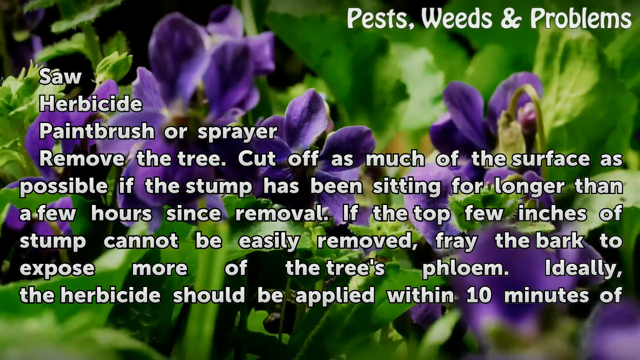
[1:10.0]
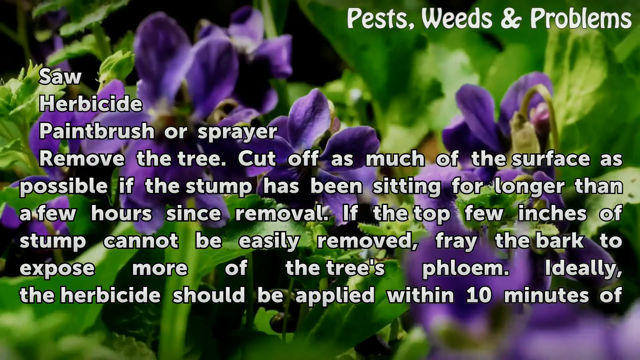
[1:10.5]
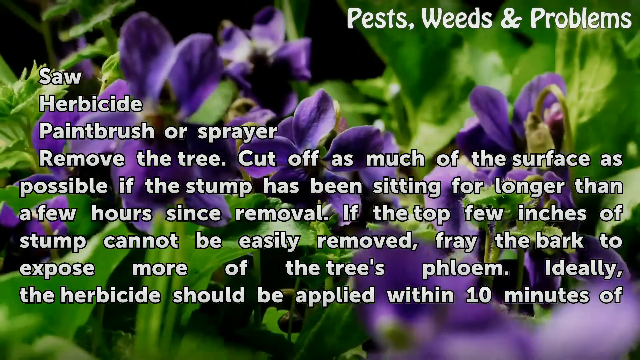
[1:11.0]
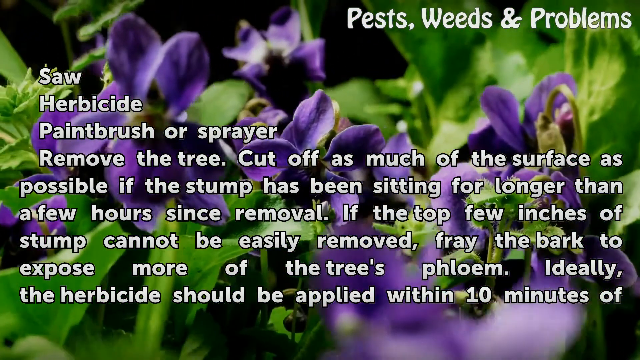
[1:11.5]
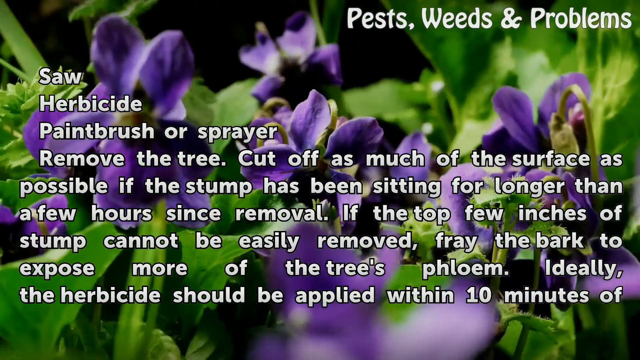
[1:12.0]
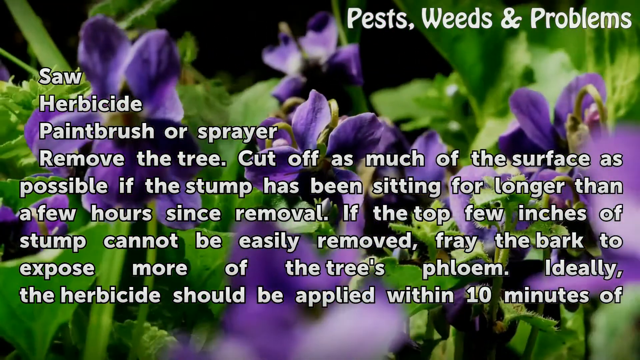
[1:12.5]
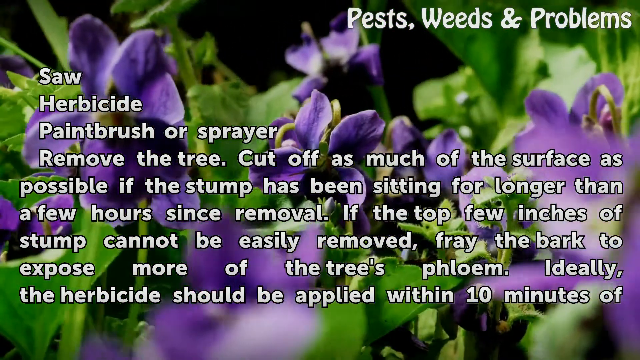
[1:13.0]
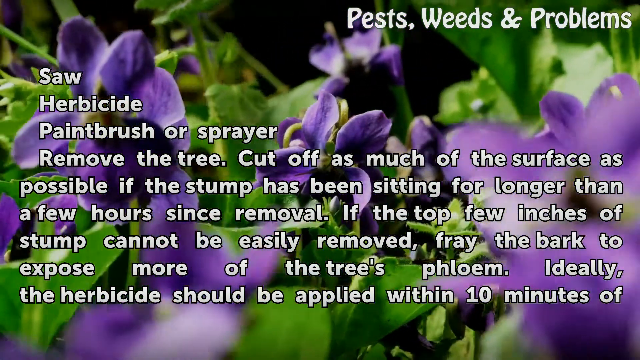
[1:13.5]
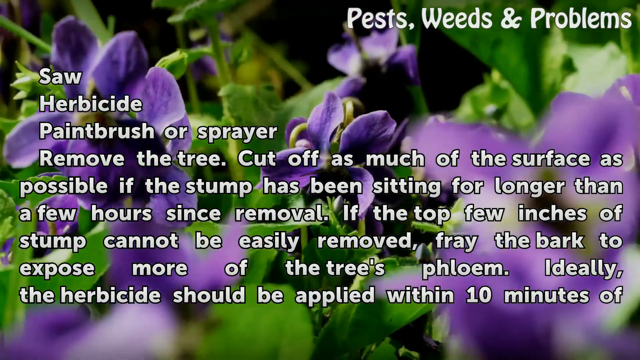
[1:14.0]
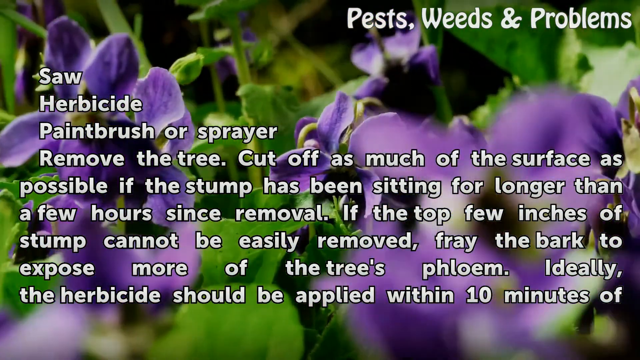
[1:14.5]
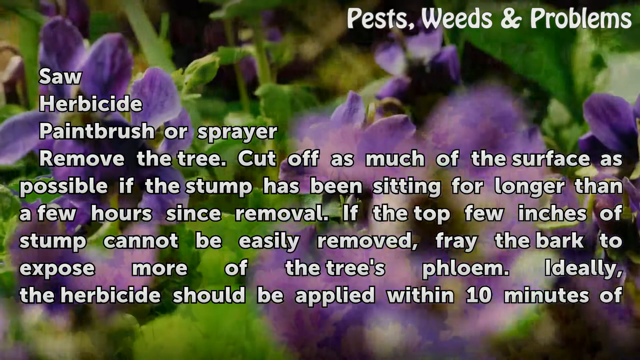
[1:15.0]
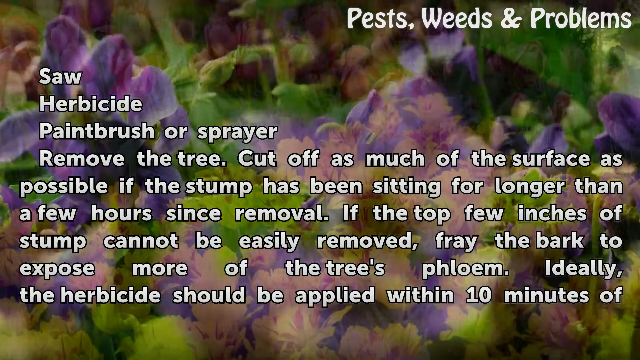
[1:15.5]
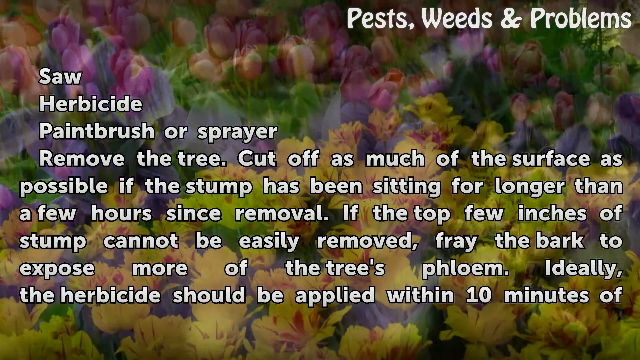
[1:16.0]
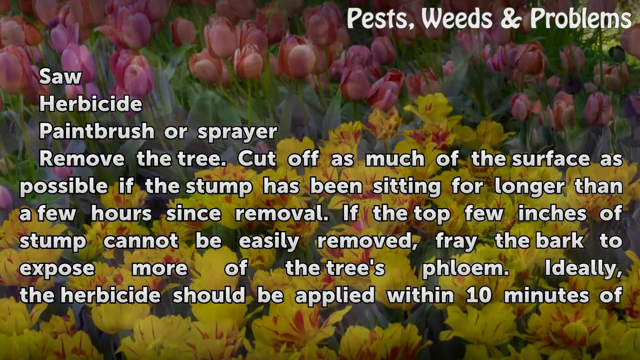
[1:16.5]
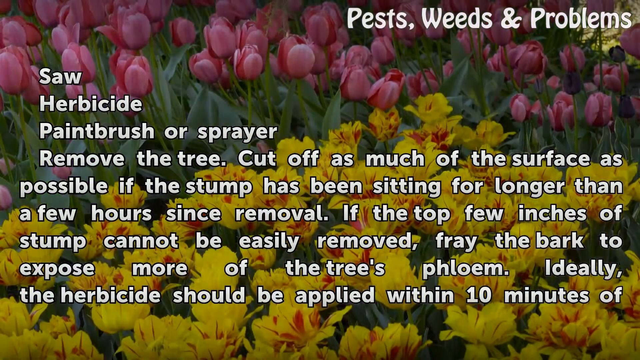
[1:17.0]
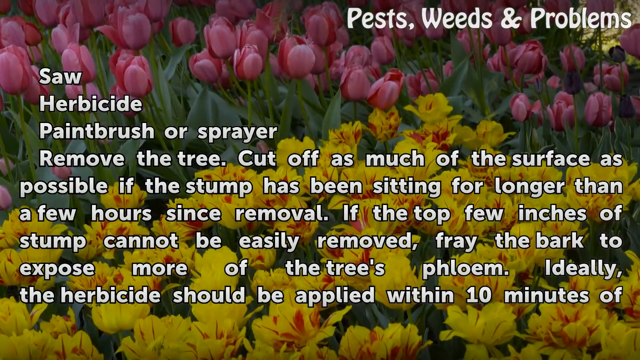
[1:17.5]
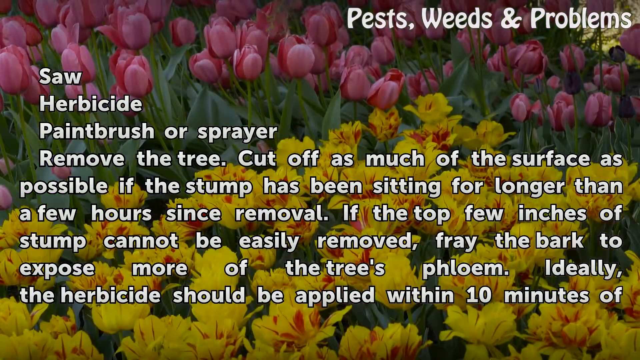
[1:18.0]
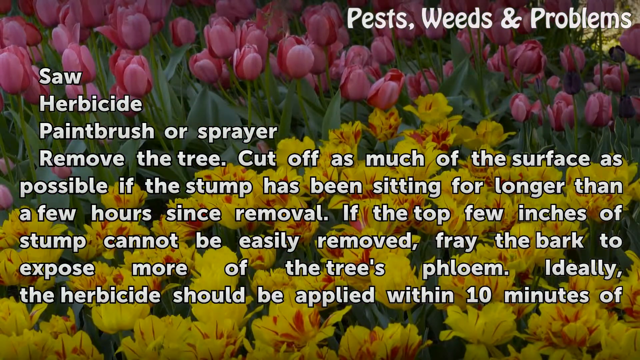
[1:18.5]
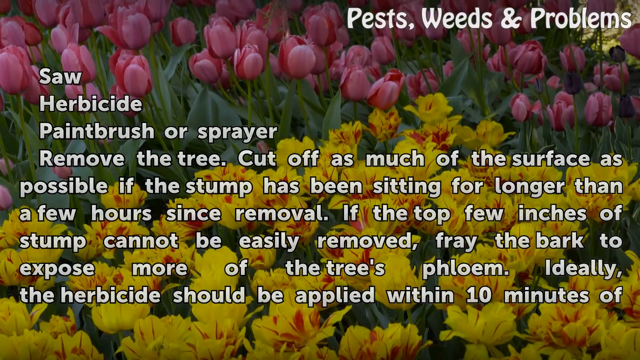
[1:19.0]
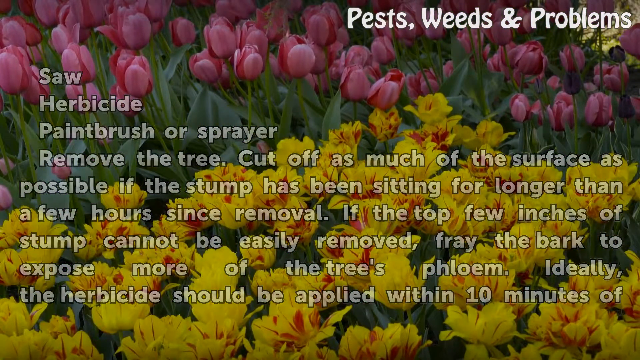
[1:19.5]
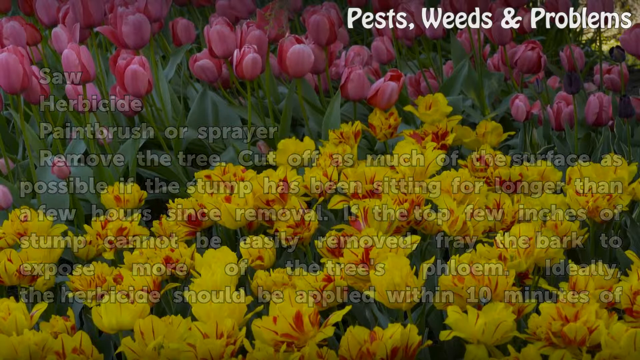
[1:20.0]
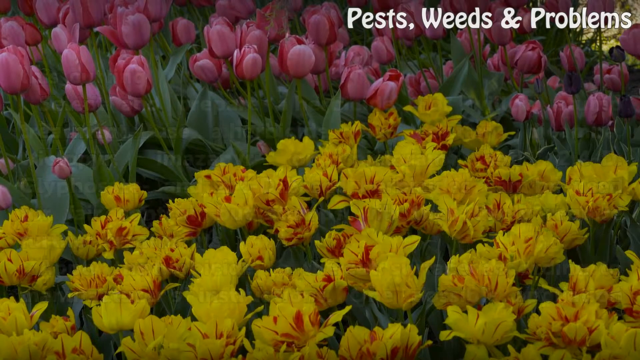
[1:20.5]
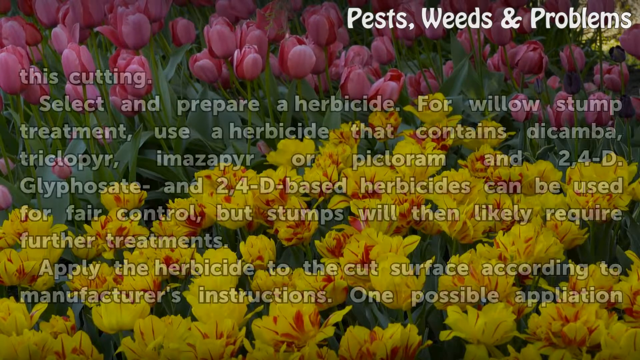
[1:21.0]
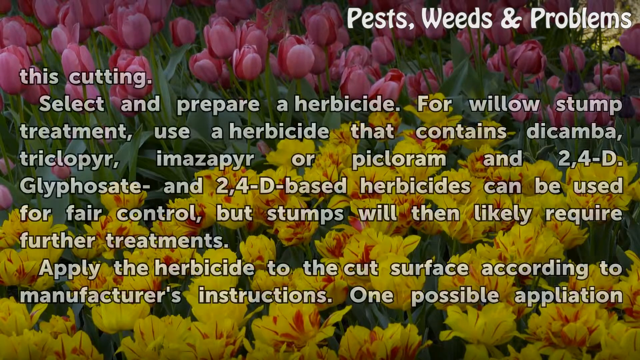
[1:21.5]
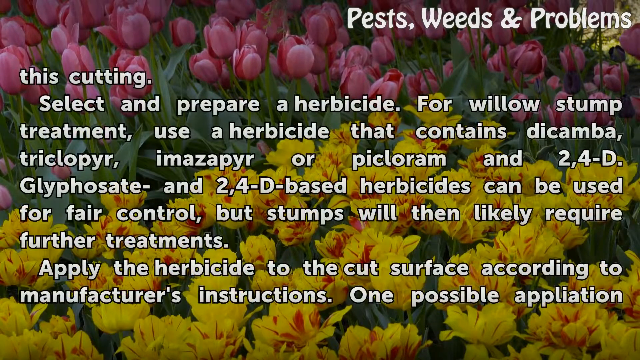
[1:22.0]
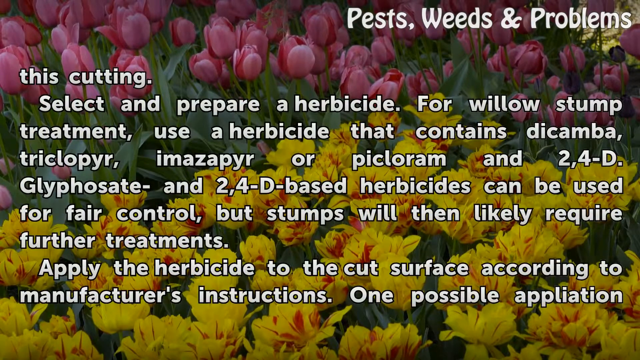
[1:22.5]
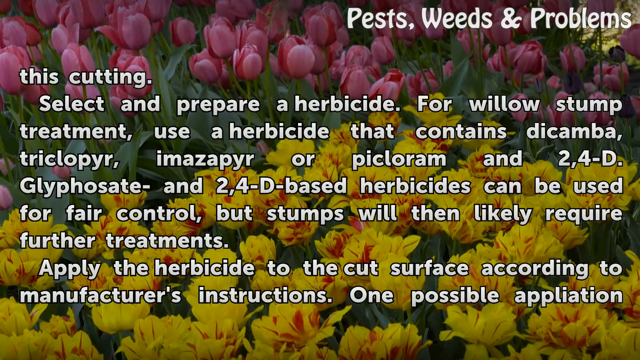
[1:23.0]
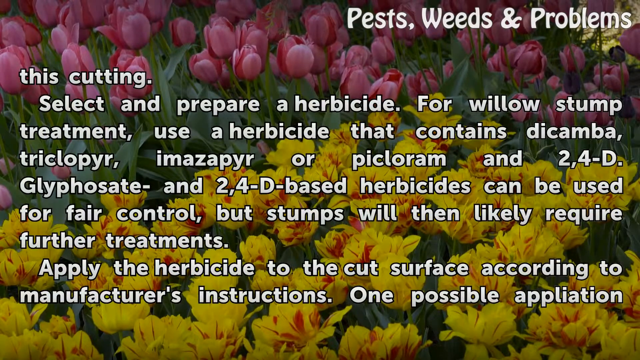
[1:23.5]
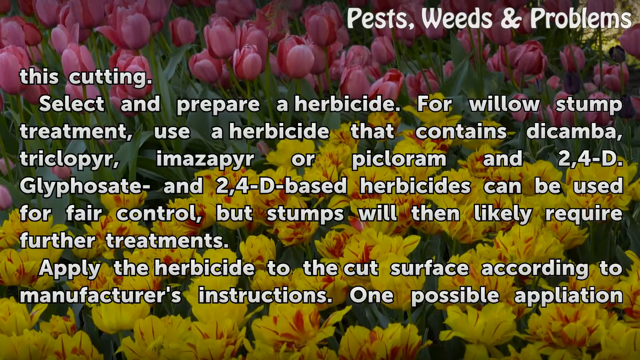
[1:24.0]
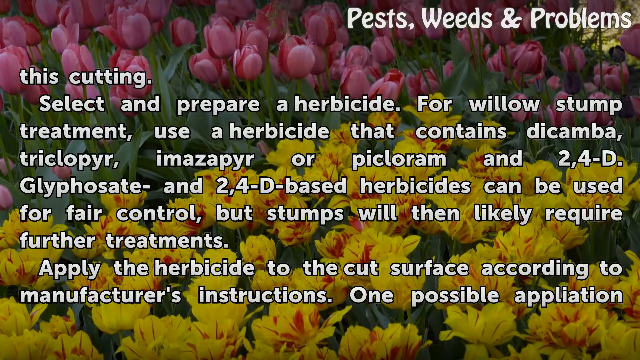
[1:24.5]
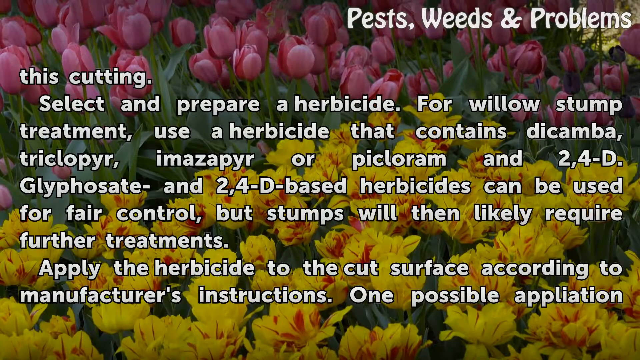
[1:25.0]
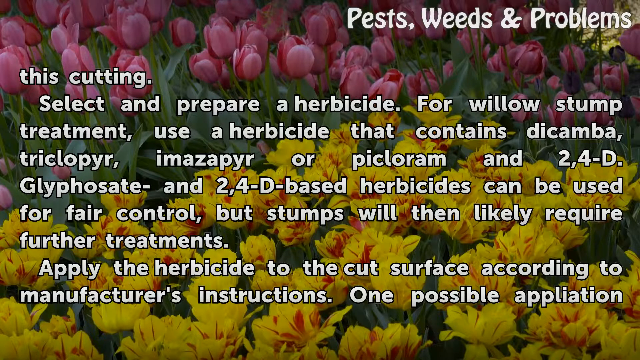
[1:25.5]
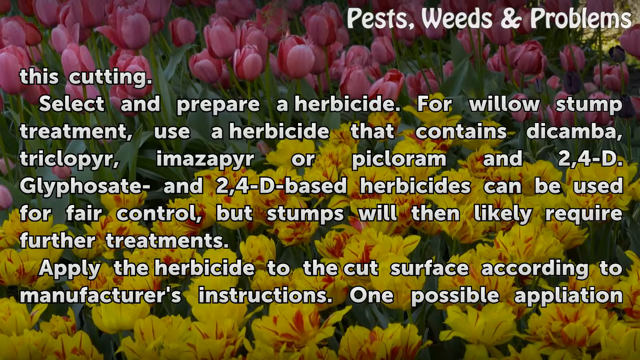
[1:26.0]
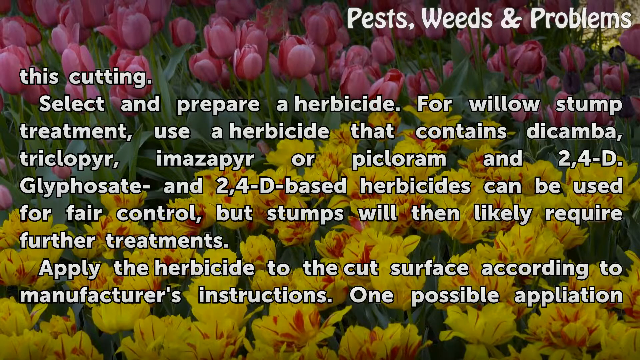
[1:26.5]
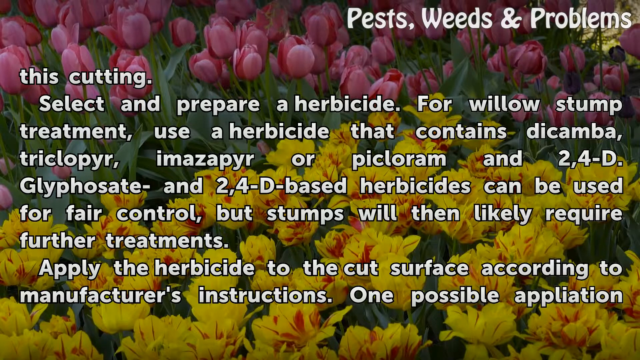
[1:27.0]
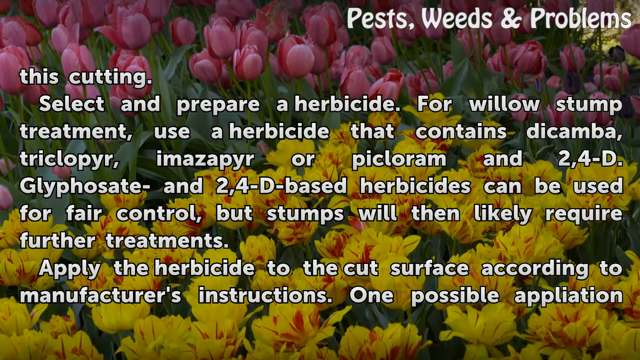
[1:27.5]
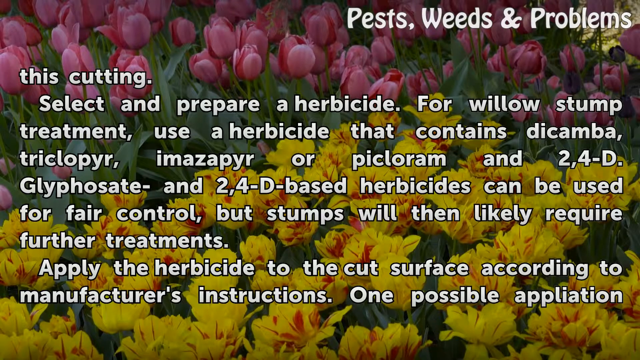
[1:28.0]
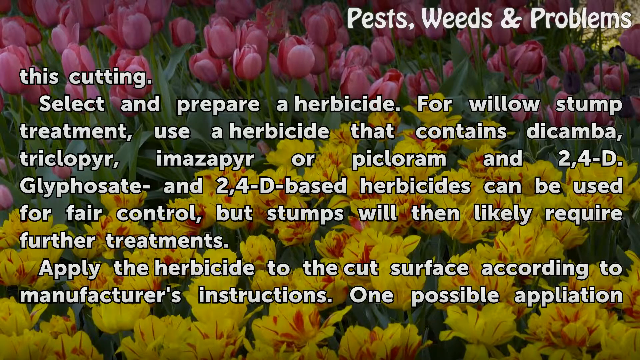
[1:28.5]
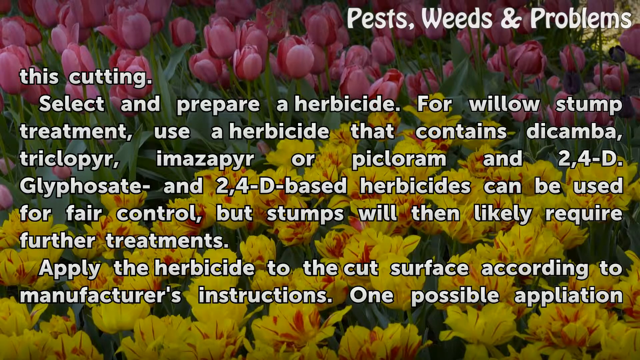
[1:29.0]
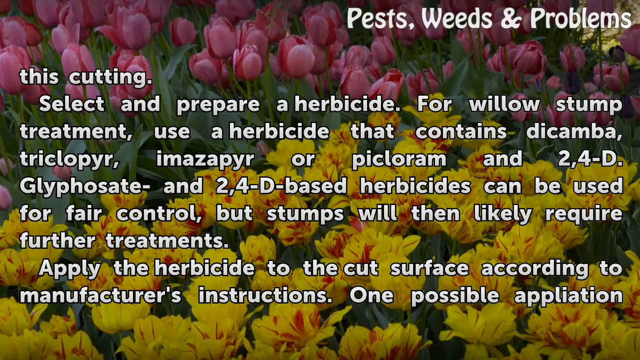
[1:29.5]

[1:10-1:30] The text lists the things needed, "saw", "herbicide" and "paintbrush or sprayer", then reads "remove the tree. Cut off as much of the surface as possible if the stump has been sitting for longer than a few hours since removal. If the top few inches of the stump cannot be easily removed, fray the bark to expose more of the tree's phloem. Ideally, the herbicide should be applied within 10 minutes of". Purple flowers are in the background, and it looks as if the camera is moving around them. Then the flowers shine yellow and pink. Text reads "this cutting", then "select and prepare herbicide for willow stump treatment. Use a herbicide that contains dicamba, triclopyr, imazapyr or picloram and 2-4-D." Further text says glyphosate and 2-4-D-based herbicides can be used, "but stumps would then likely require further treatments. Apply the herbicide to the cut surface according to the manufacturer's instructions. One possible application".